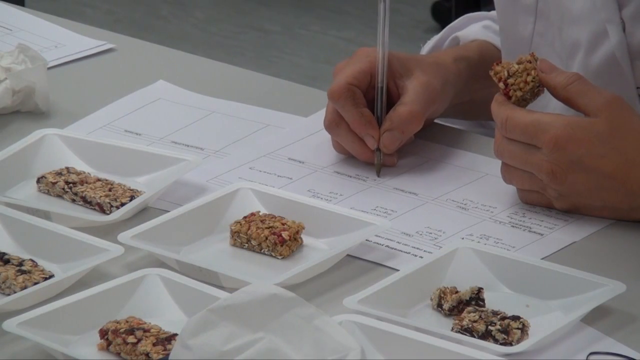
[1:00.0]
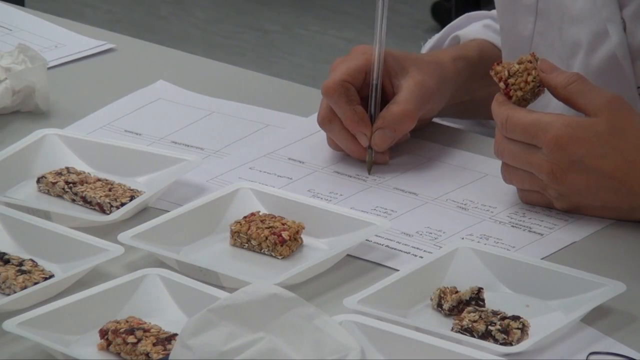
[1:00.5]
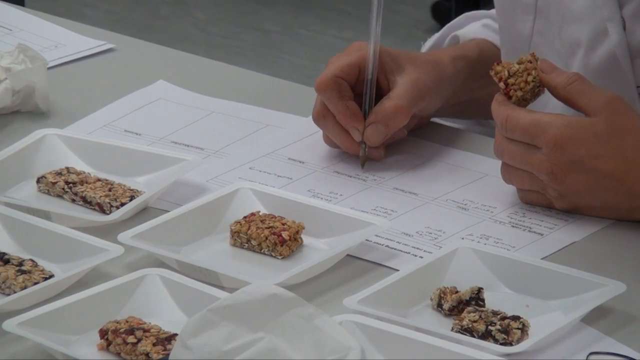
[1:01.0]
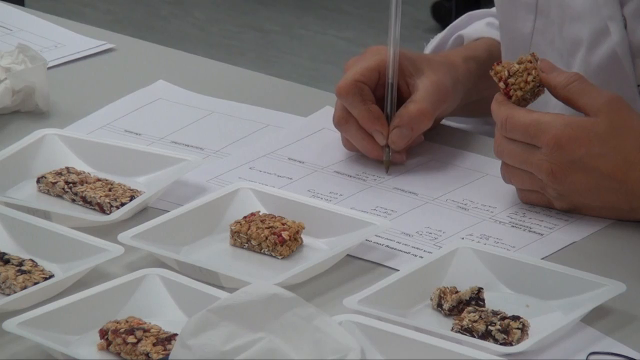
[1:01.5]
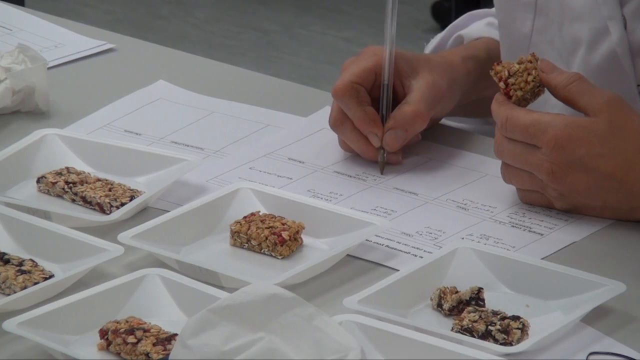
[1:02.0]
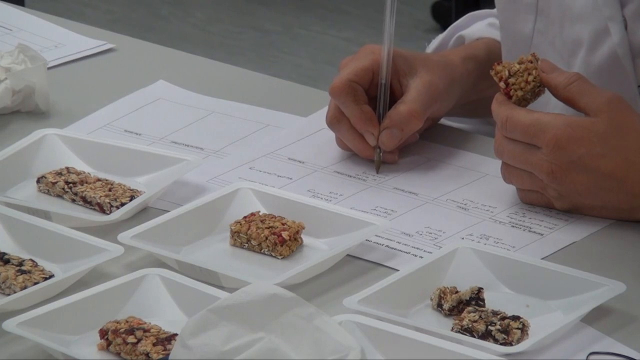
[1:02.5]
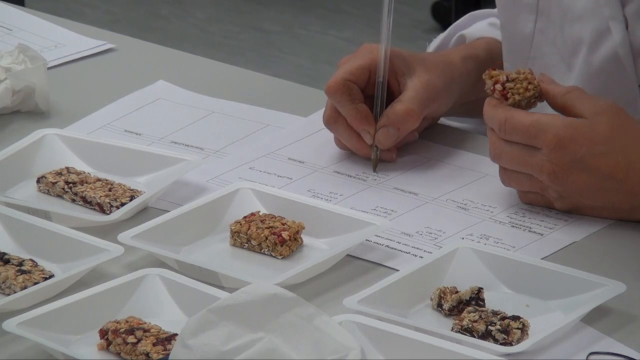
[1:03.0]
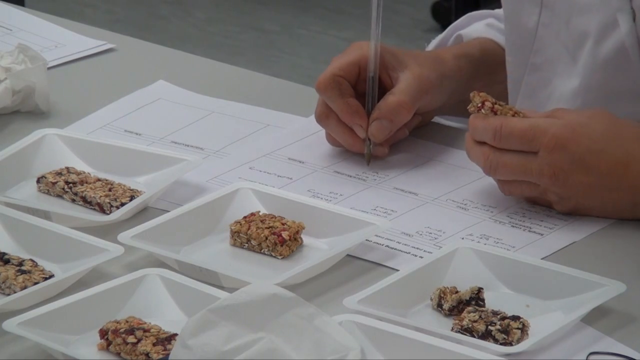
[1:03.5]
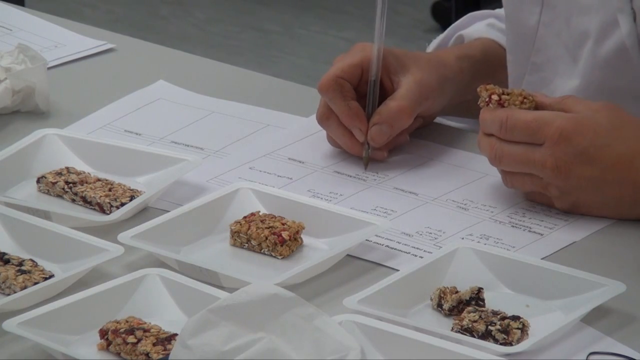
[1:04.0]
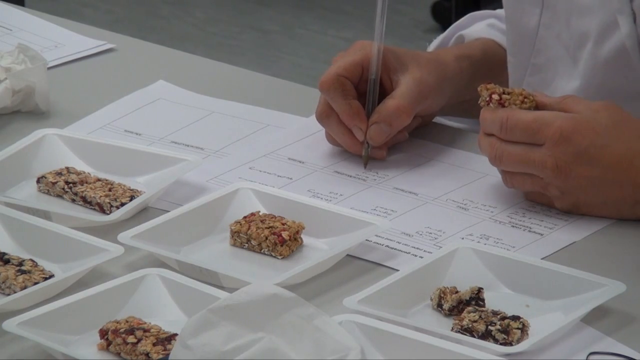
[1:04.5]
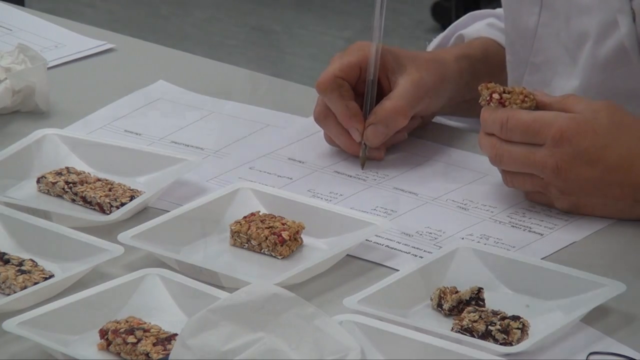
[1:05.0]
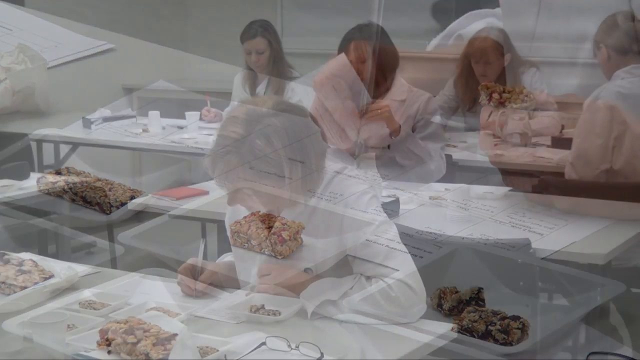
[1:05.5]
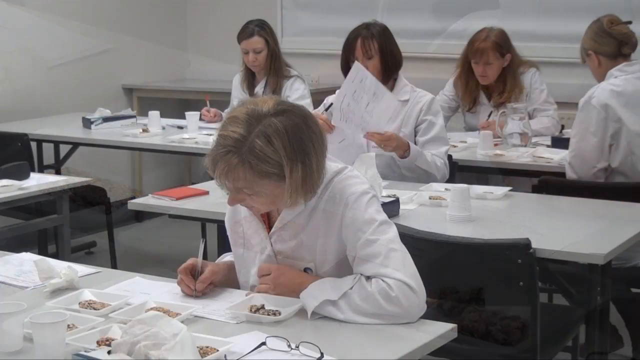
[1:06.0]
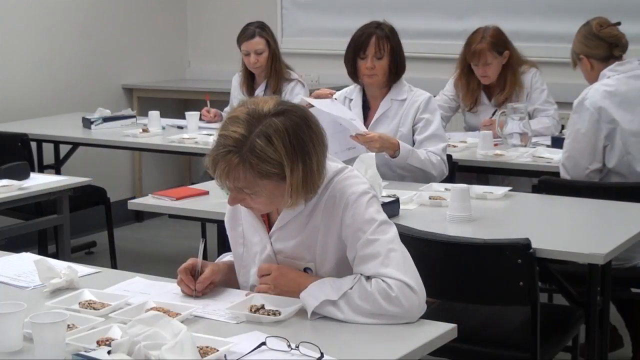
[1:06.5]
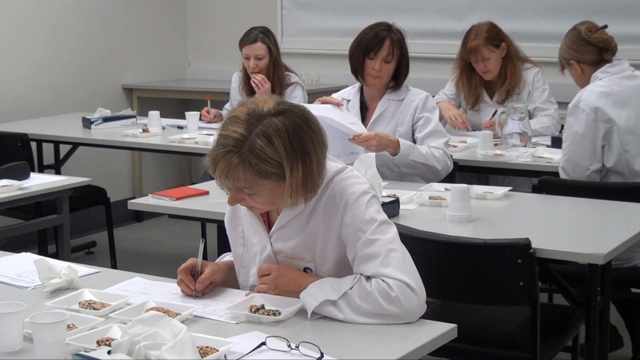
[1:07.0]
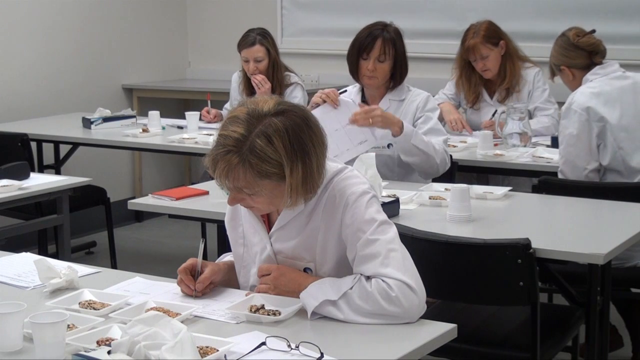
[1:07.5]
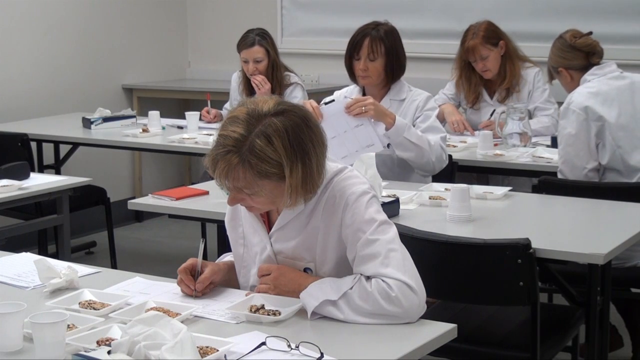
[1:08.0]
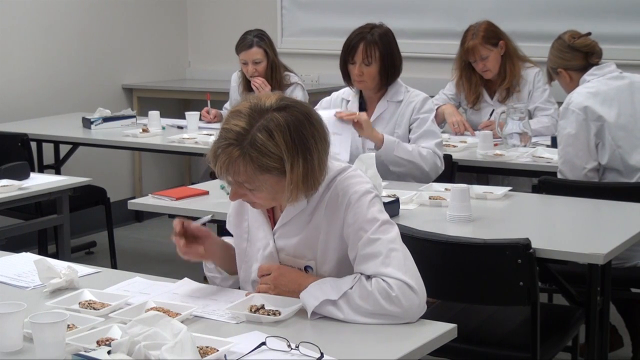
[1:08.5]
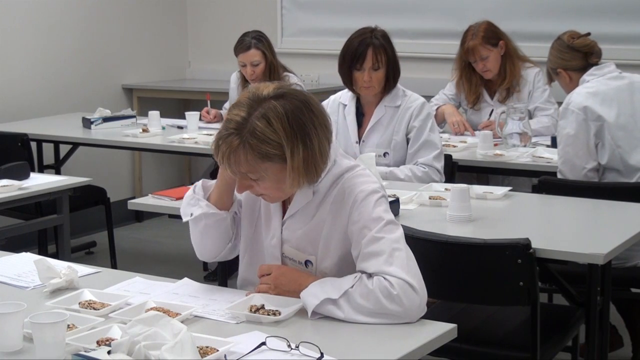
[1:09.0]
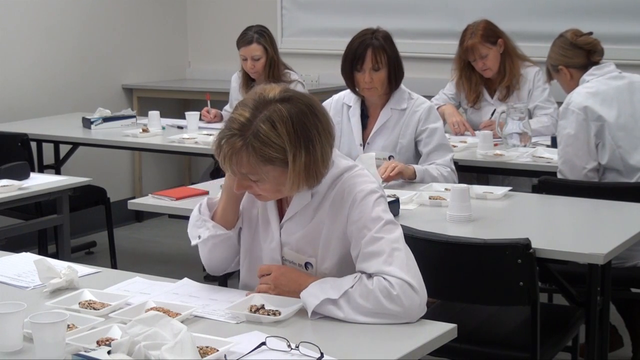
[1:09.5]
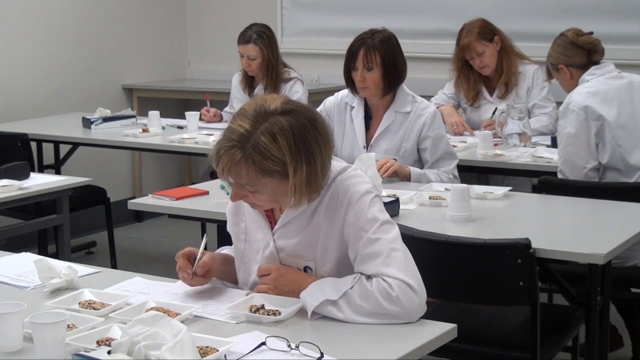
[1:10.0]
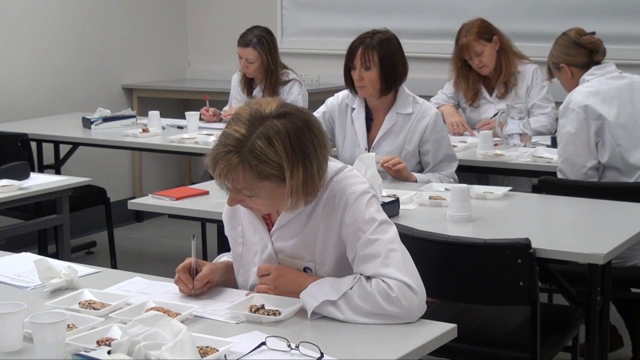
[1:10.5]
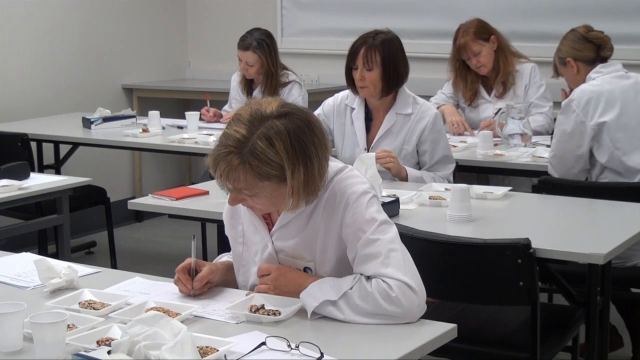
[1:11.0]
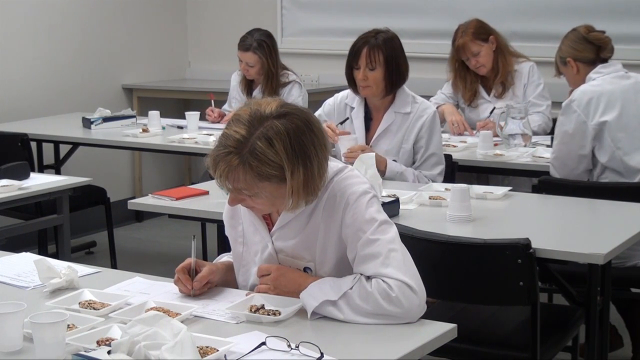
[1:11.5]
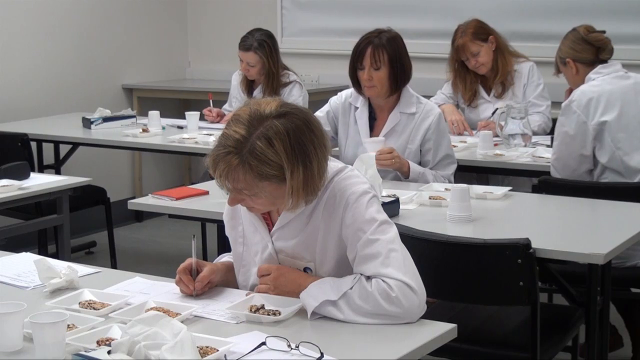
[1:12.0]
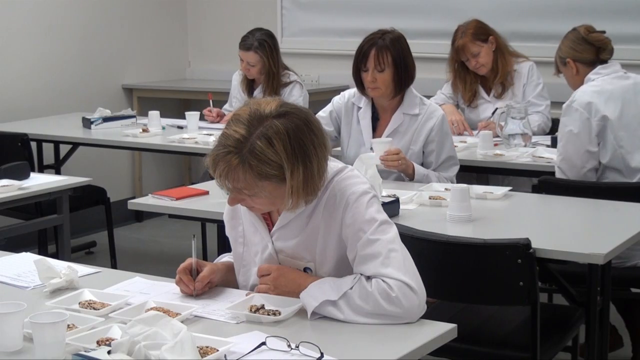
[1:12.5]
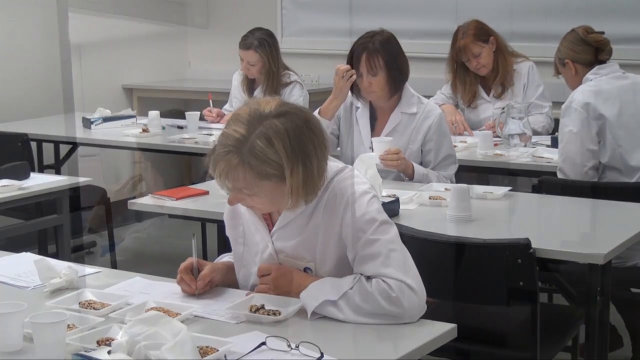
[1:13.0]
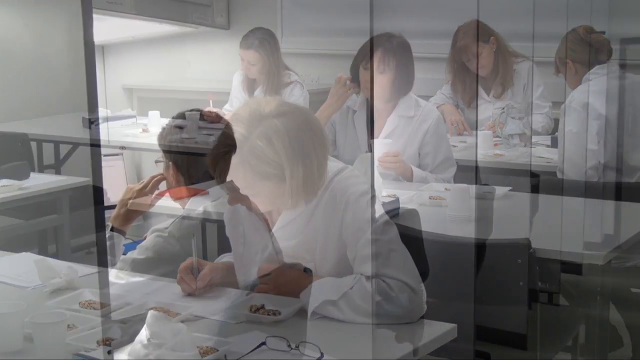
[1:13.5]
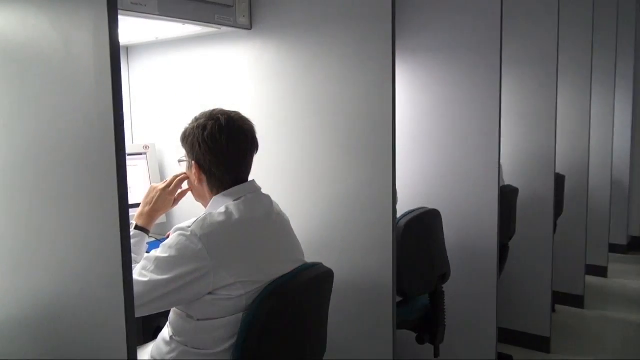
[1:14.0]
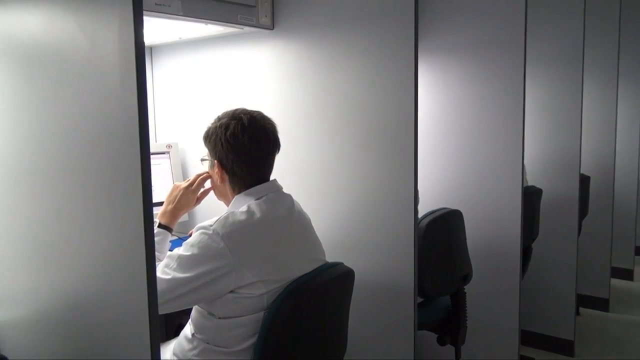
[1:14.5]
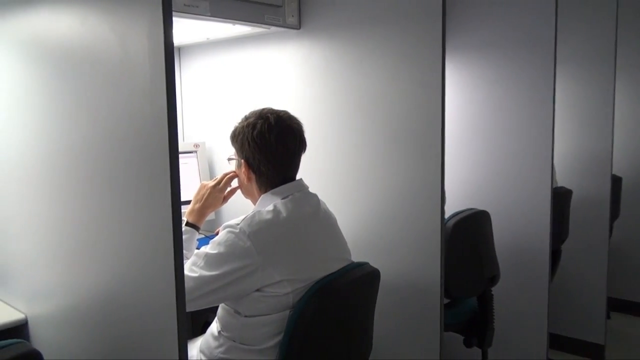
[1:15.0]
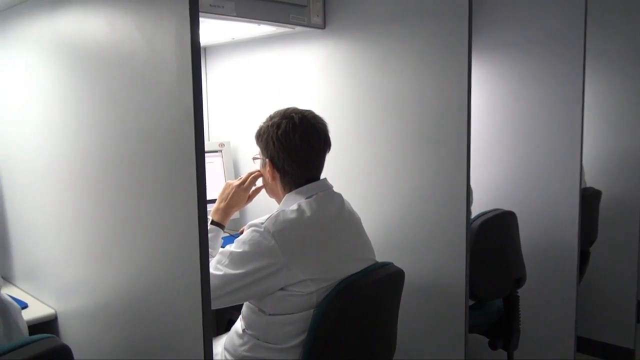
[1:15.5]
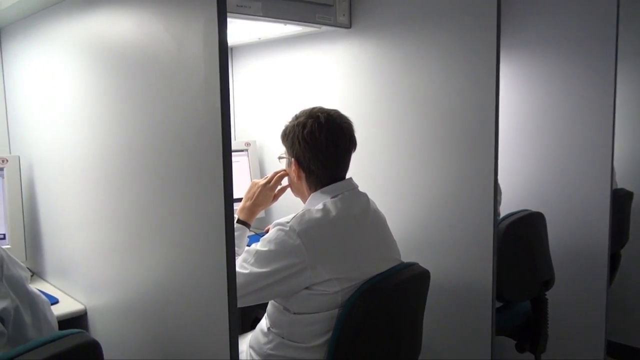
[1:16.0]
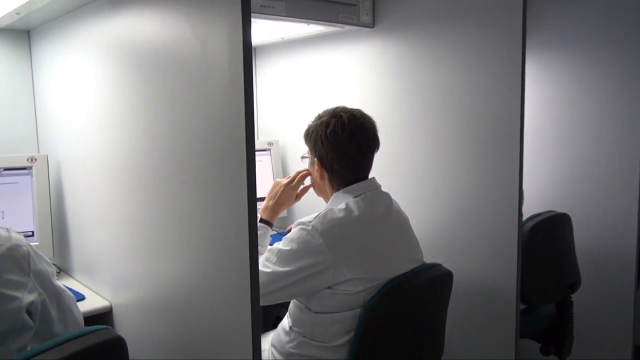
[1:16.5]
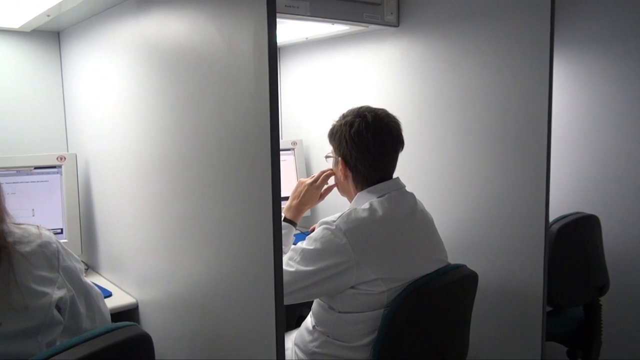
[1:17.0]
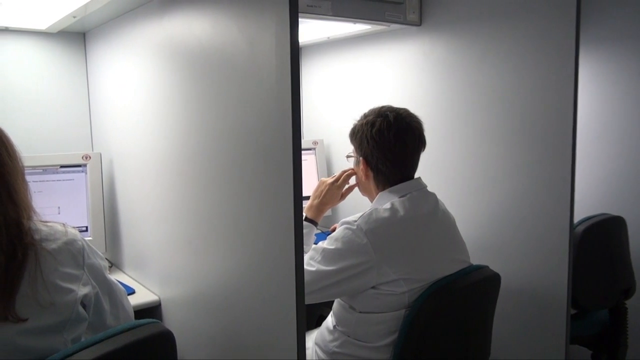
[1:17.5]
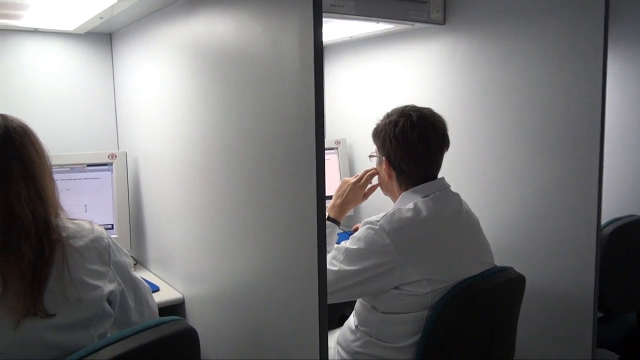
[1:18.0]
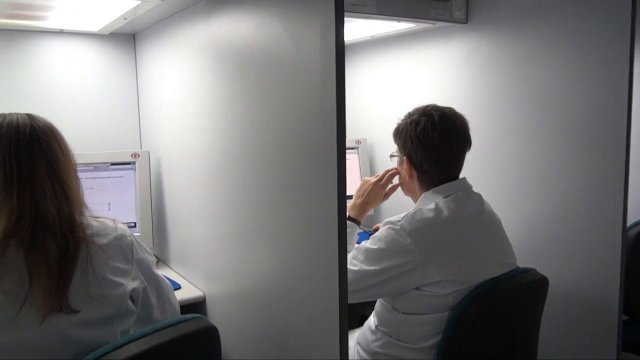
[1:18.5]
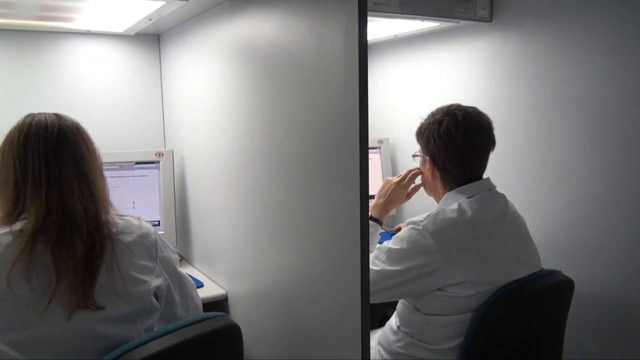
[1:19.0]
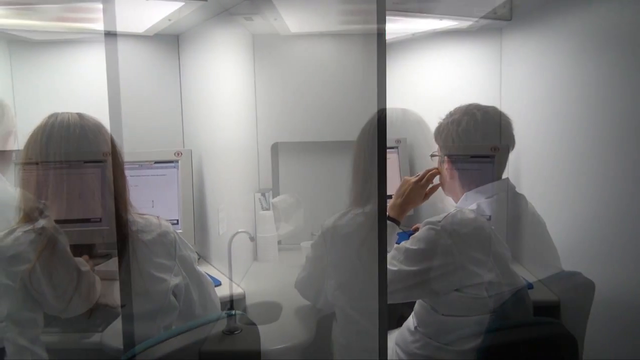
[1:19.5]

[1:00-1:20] As they write, no one talks to anyone; everyone is quiet and concentrating on what is in front of them. A woman with sunglasses on her table is also very serious and concentrating. She holds a piece of the food, and while writing she pauses, touches her hair and pulls it backwards. She has blonde, almost shoulder-length hair and writes with her right hand, apparently with a blue pen. Men are also in the building, apparently in a different room, concentrating on computers. They are seated in what look like single-person cubicles, on black chairs, and are very focused. One man is seated in front of a computer.